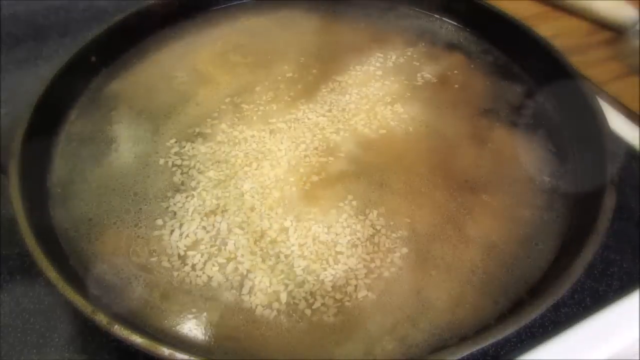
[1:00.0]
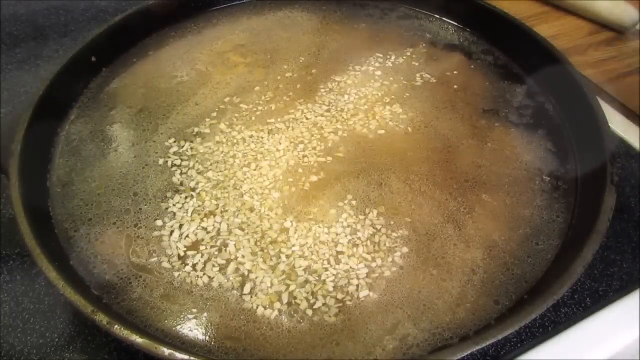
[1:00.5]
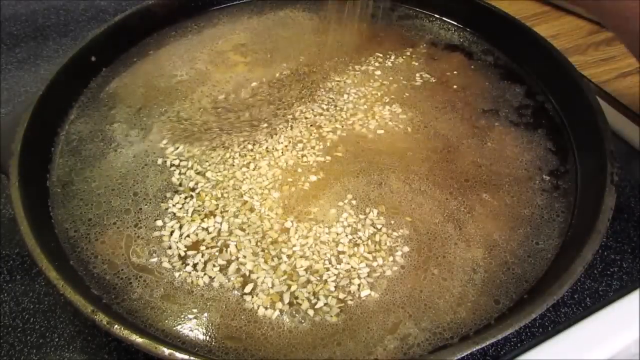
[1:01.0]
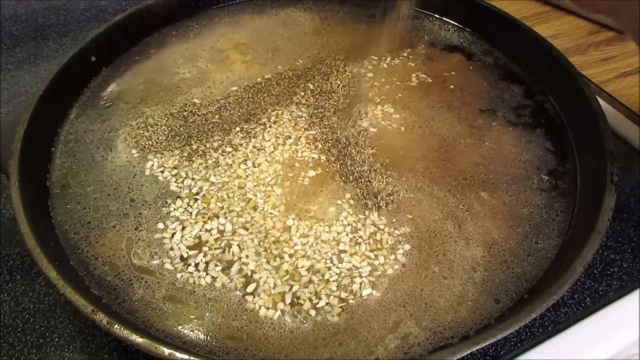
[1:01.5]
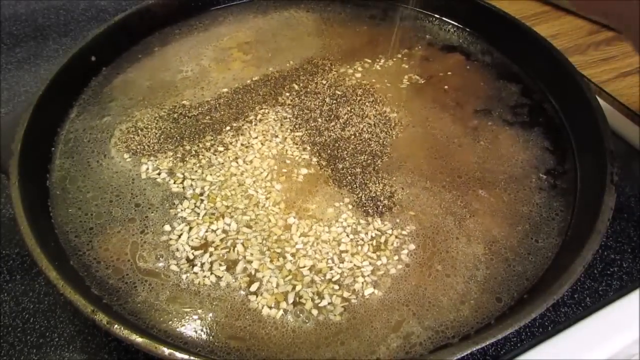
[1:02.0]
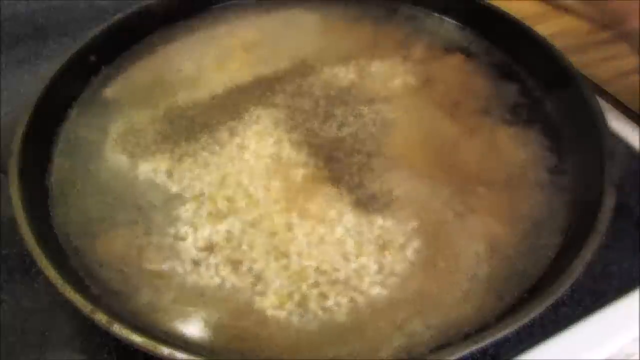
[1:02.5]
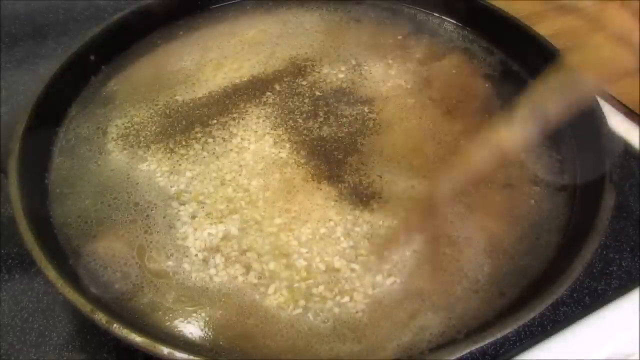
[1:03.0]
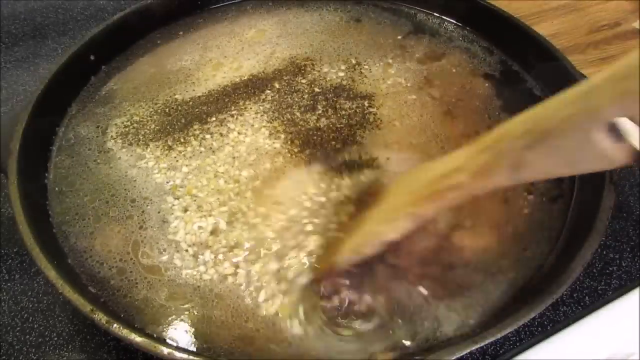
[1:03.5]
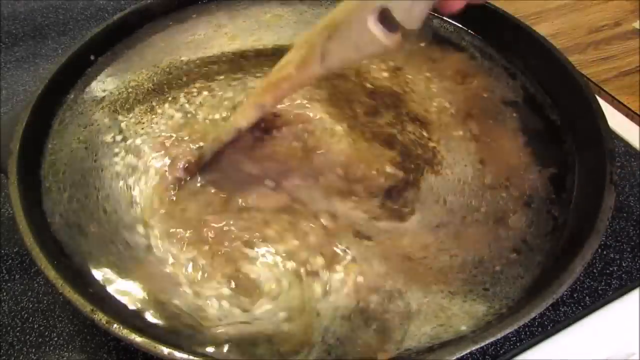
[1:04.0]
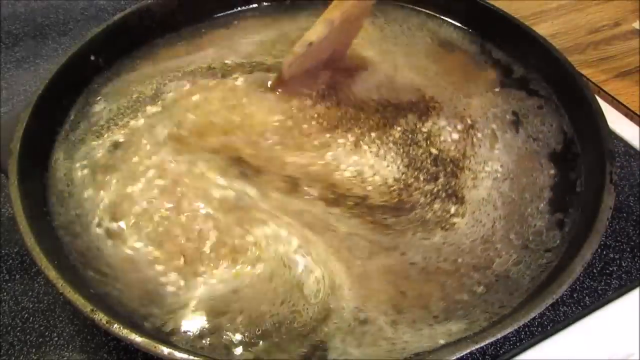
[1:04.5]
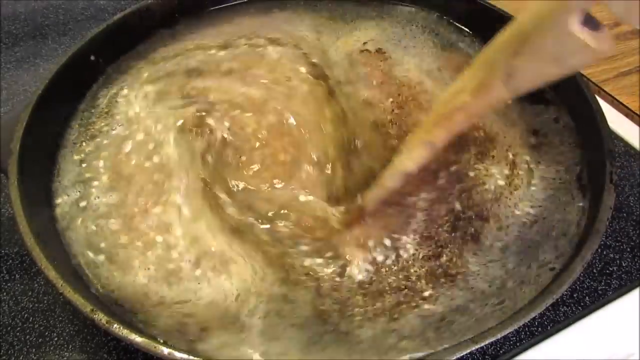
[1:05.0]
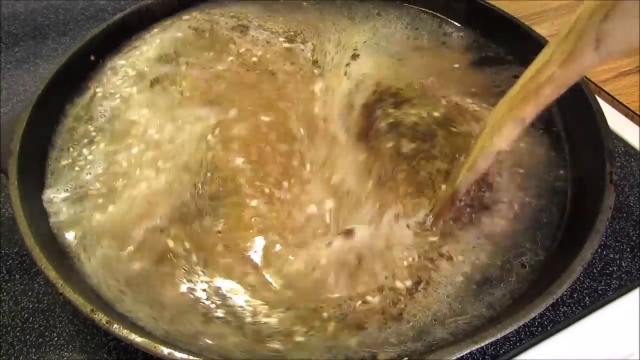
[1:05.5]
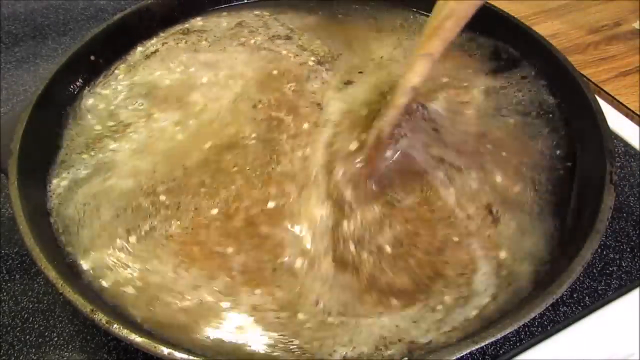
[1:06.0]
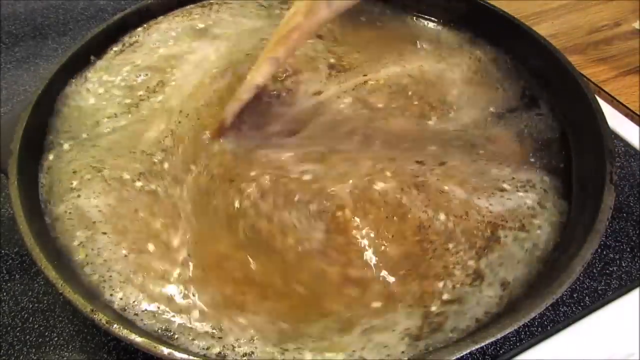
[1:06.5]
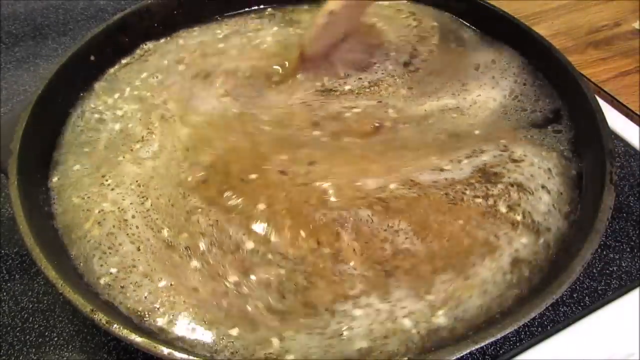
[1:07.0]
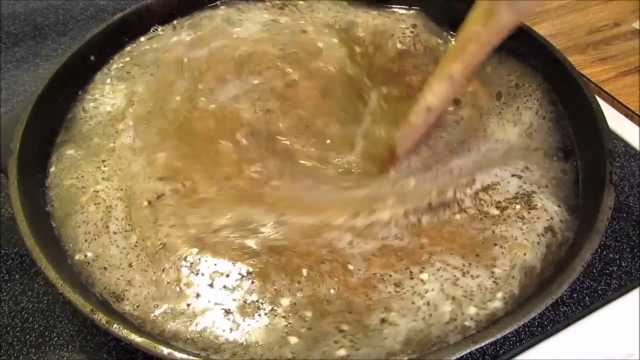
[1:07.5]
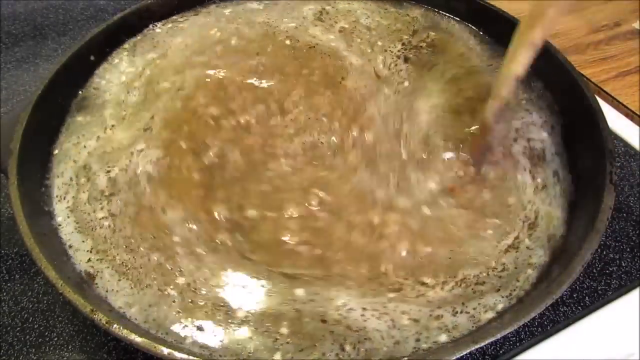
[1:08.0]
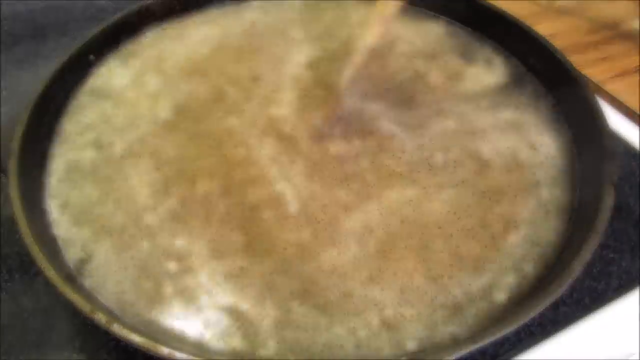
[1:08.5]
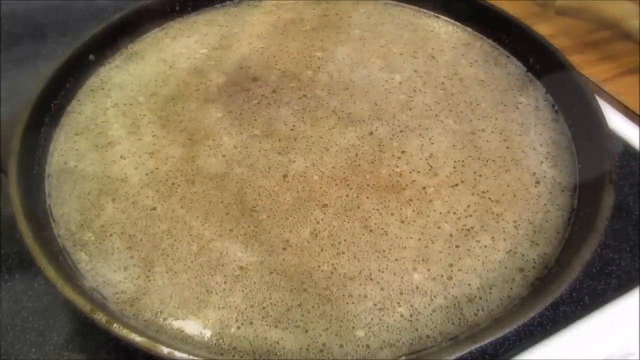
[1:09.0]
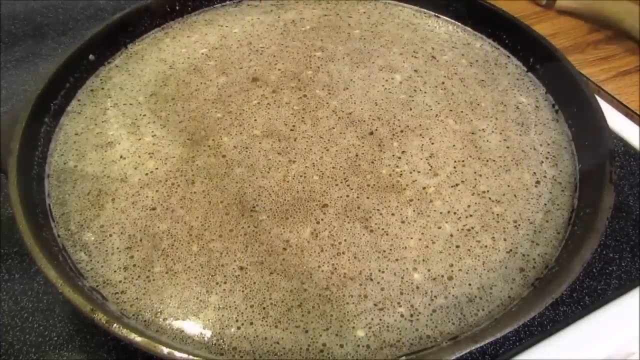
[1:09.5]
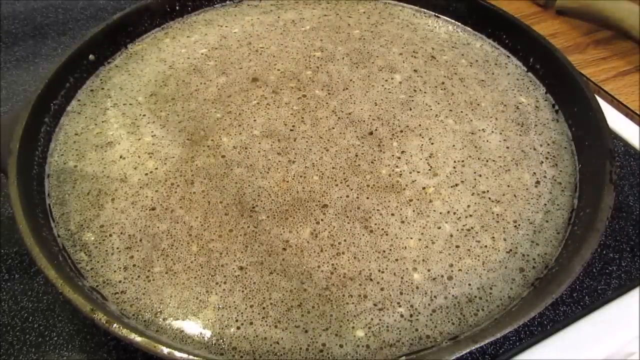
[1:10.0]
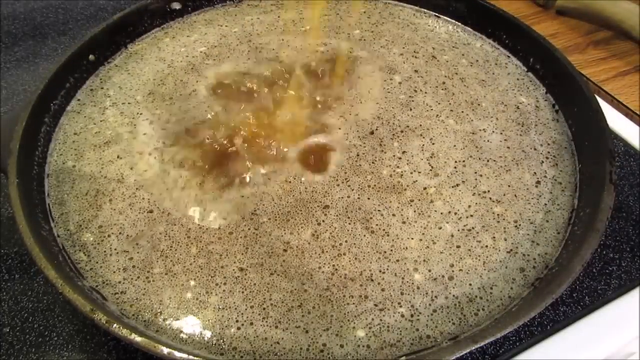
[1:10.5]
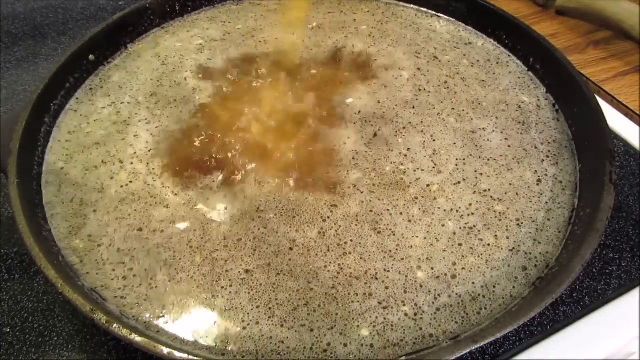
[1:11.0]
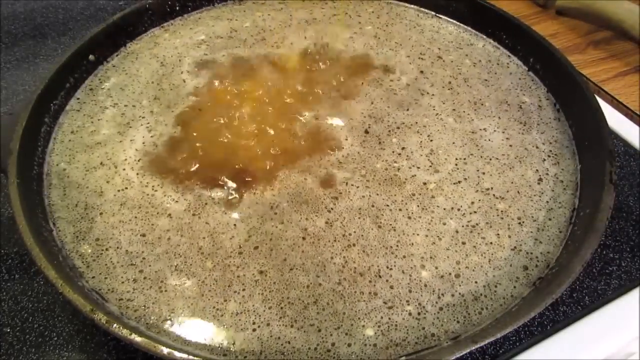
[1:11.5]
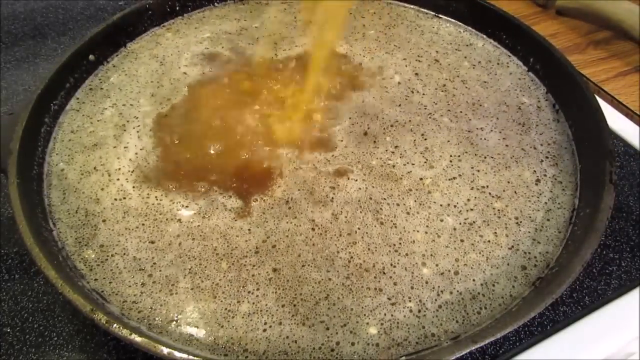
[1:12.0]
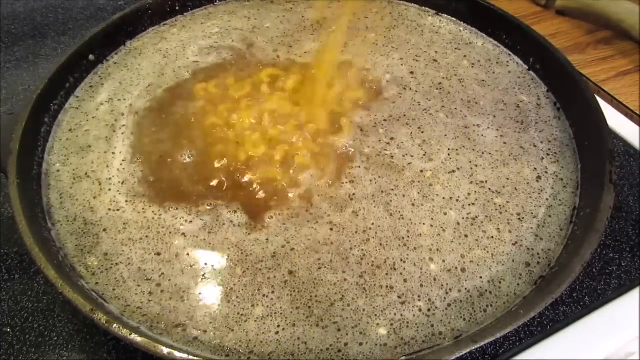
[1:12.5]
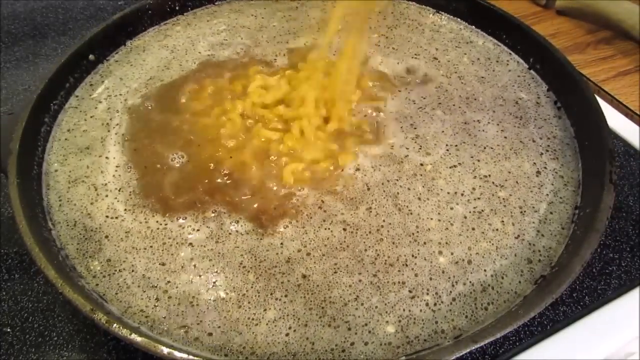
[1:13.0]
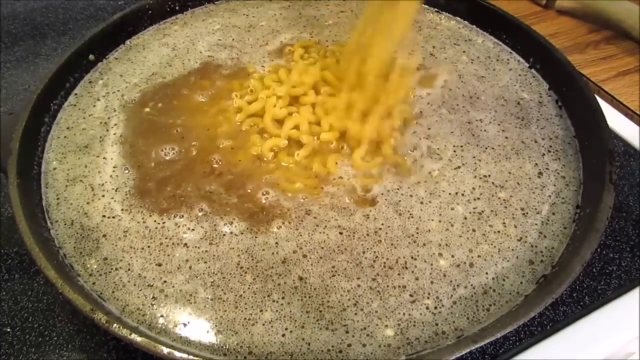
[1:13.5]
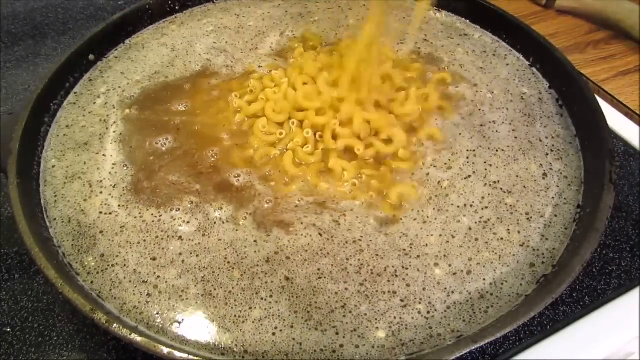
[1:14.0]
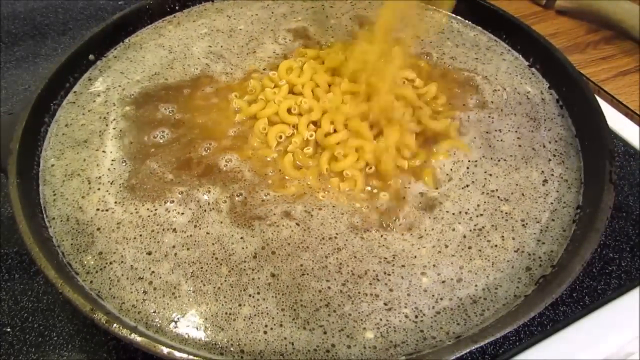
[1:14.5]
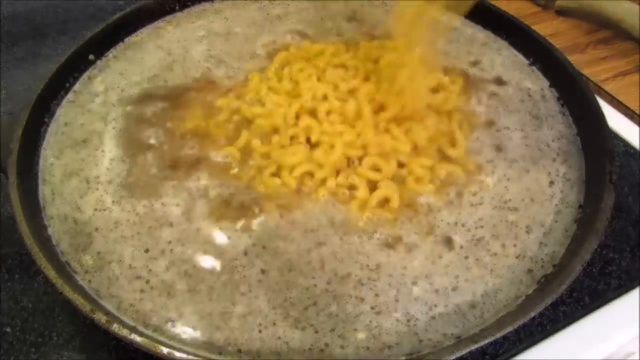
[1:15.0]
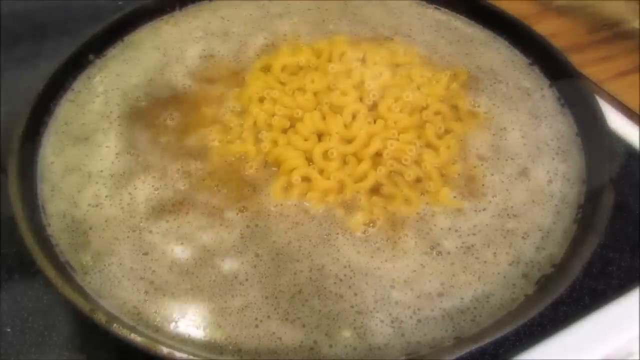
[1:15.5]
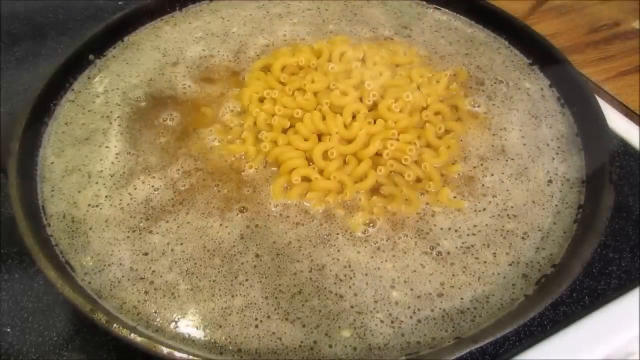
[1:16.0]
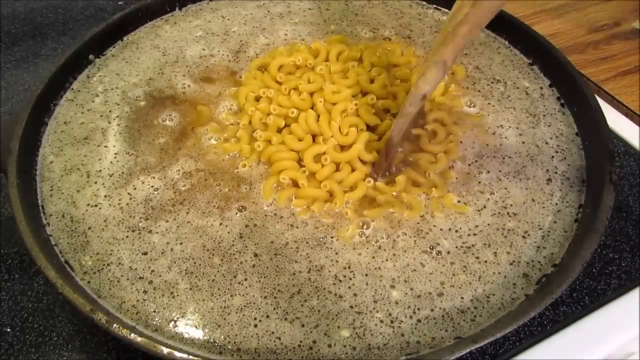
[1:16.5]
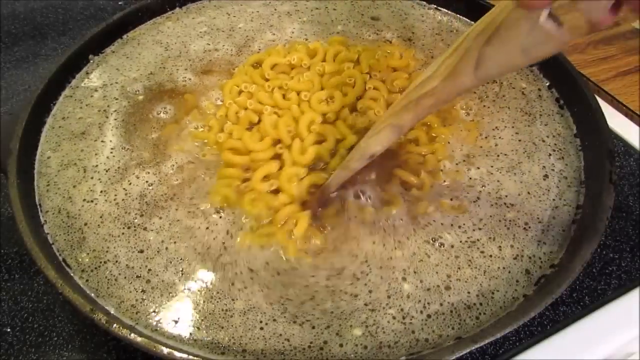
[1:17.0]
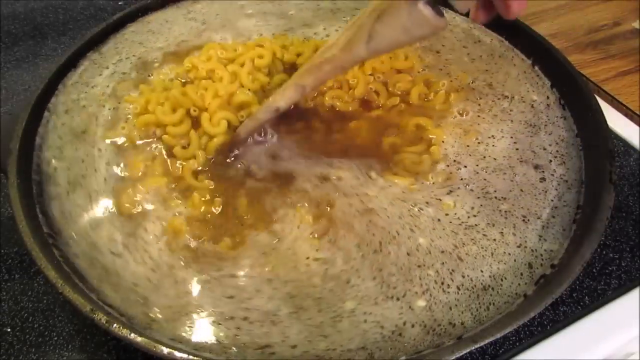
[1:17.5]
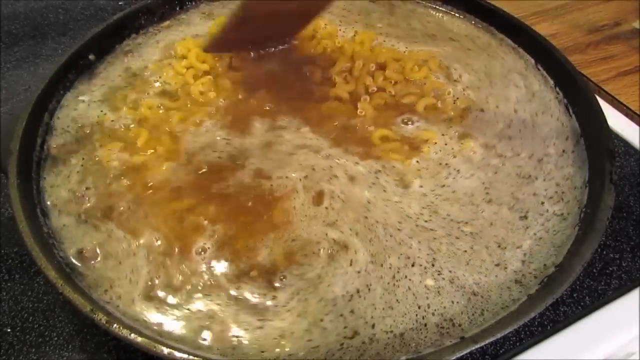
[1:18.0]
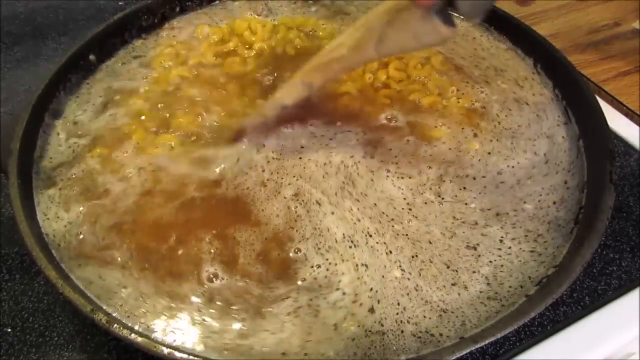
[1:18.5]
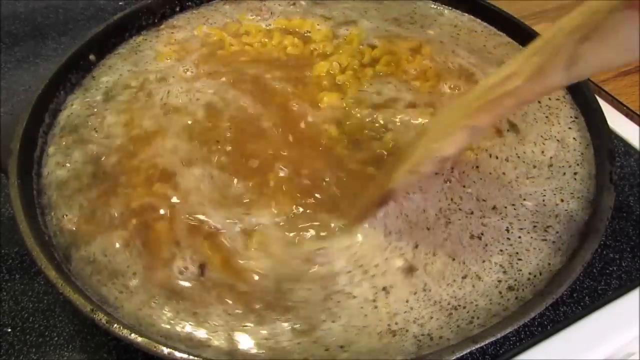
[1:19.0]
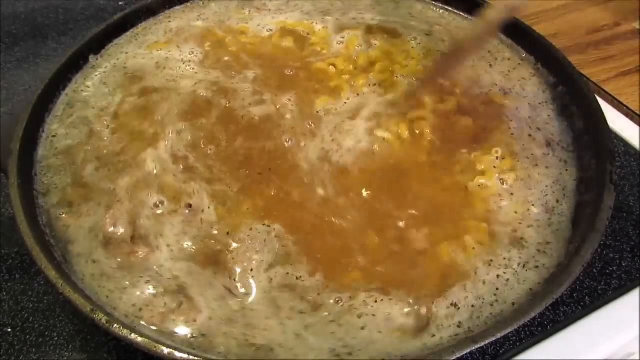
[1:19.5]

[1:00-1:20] More granular spices are added; they are not smooth and not big granules, and are brown and whitish in color. They are mixed with the water and the mince in the pan, then left to sit for some time. Black bits, maybe from the spice, are on top, while the mince sits down in the pot. The macaroni is then poured right into the mixture of mince, water and spices, and everything is mixed together while it boils on the stove. Steam comes out as the water gets hot and the food cooks. She mixes the macaroni, mince and spices together in the water, apparently ready to leave it to cook and boil.